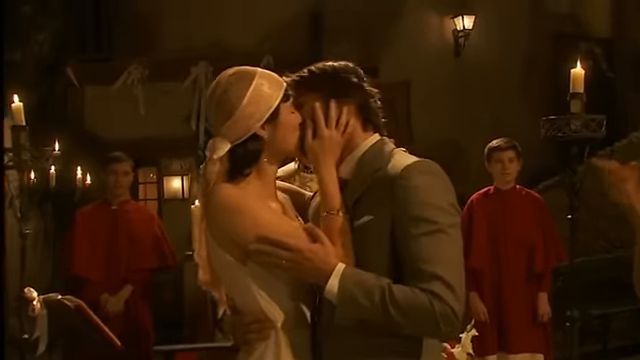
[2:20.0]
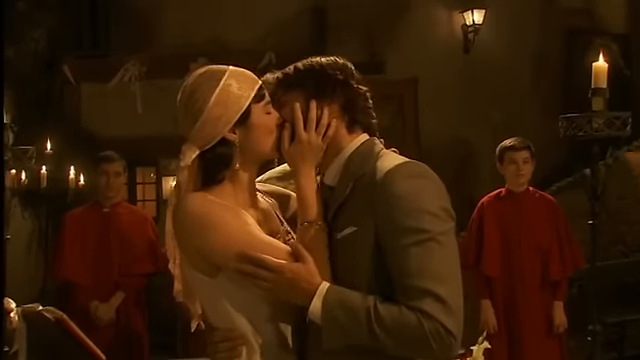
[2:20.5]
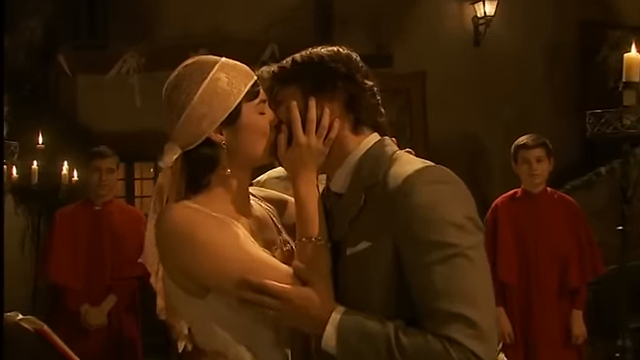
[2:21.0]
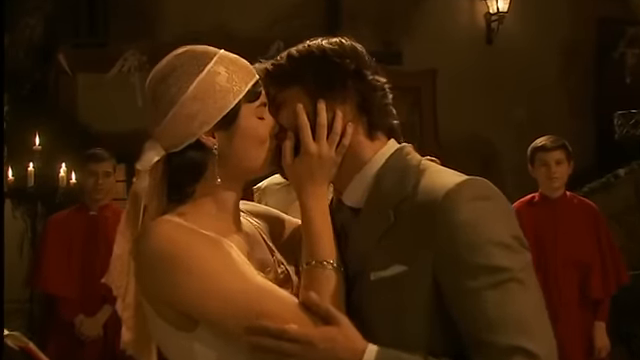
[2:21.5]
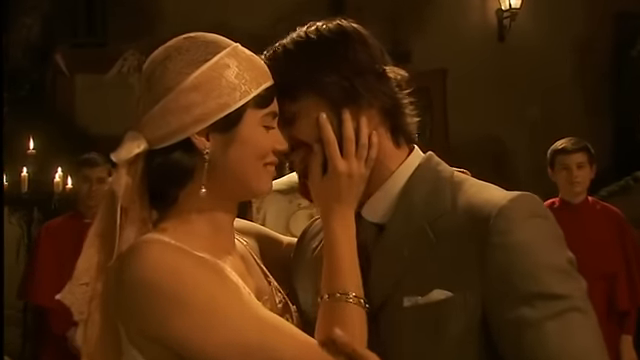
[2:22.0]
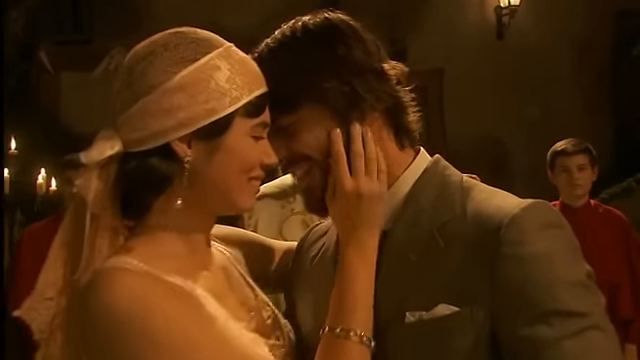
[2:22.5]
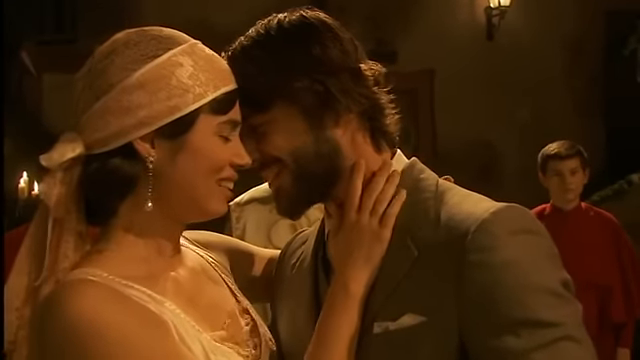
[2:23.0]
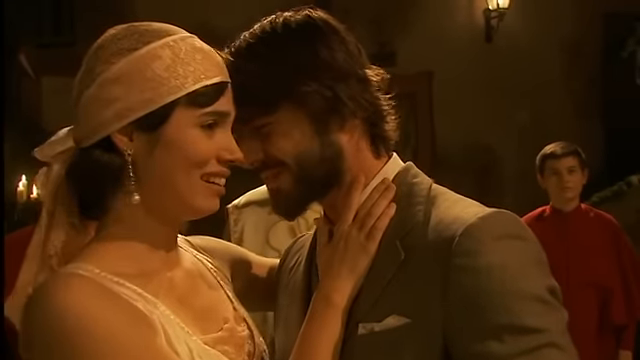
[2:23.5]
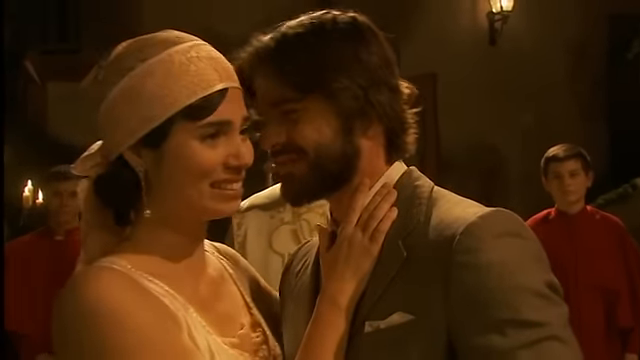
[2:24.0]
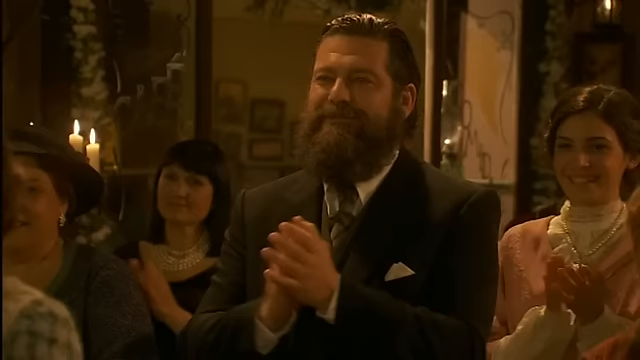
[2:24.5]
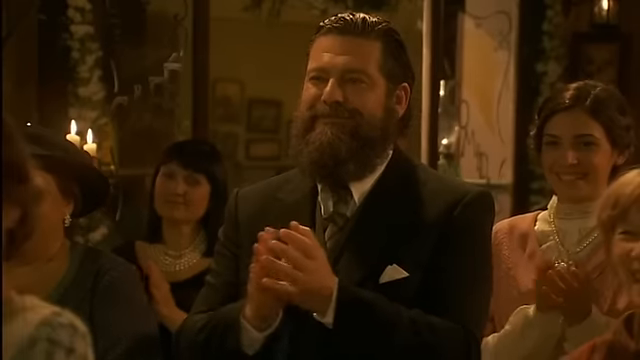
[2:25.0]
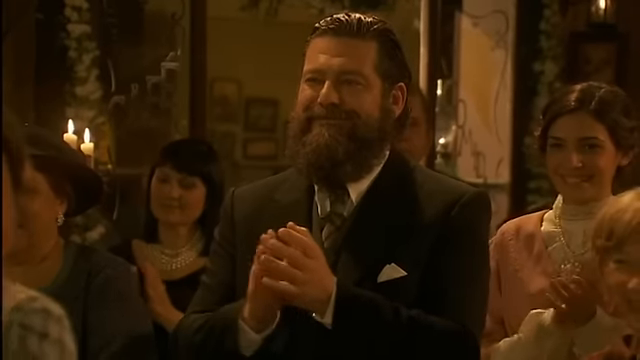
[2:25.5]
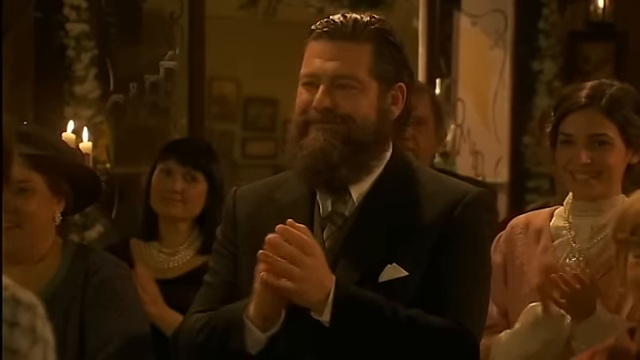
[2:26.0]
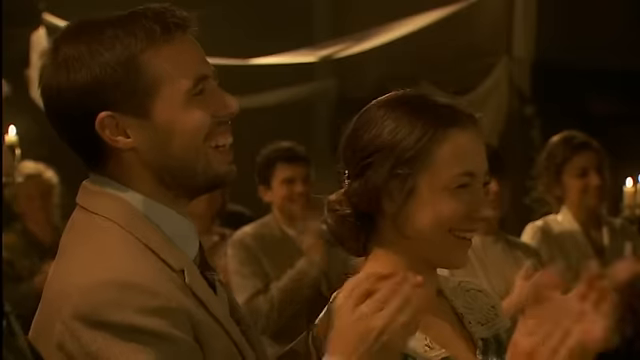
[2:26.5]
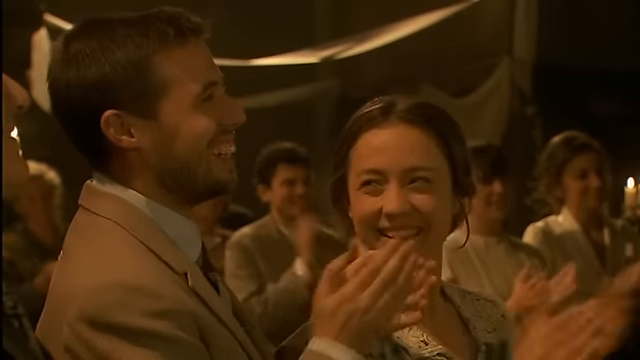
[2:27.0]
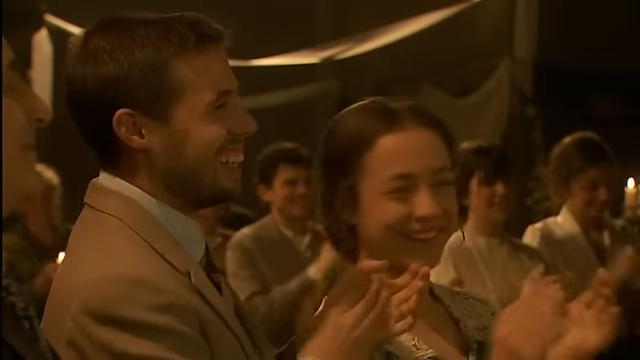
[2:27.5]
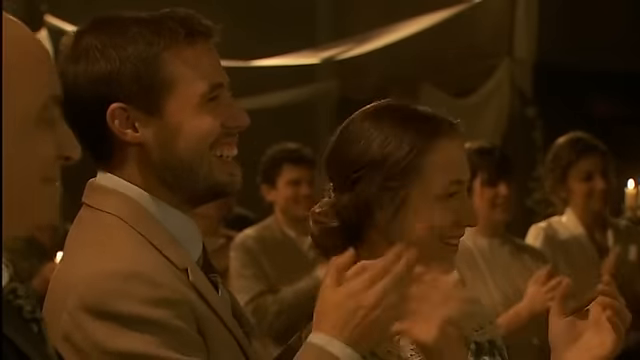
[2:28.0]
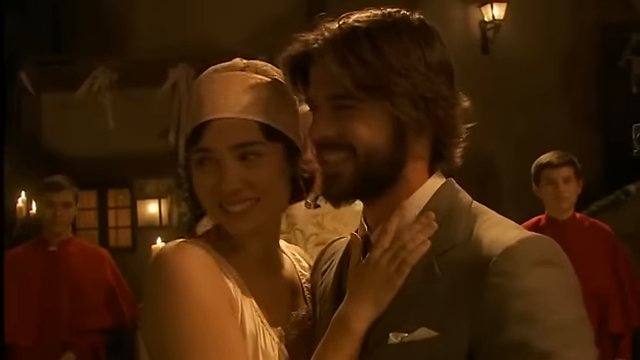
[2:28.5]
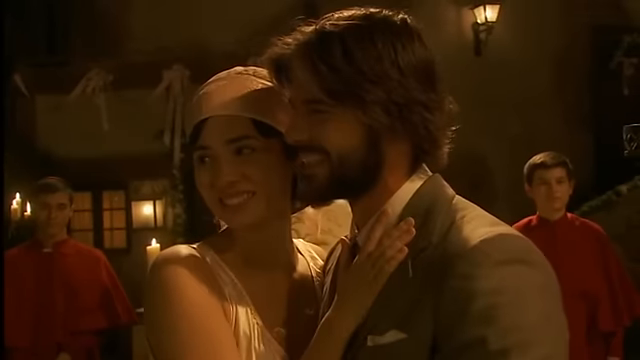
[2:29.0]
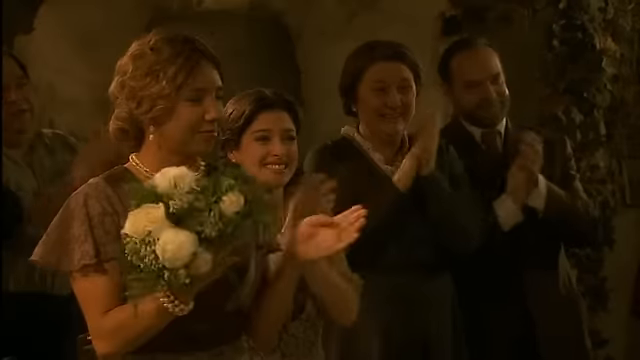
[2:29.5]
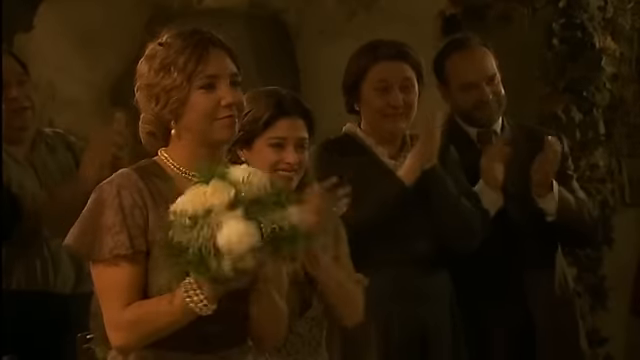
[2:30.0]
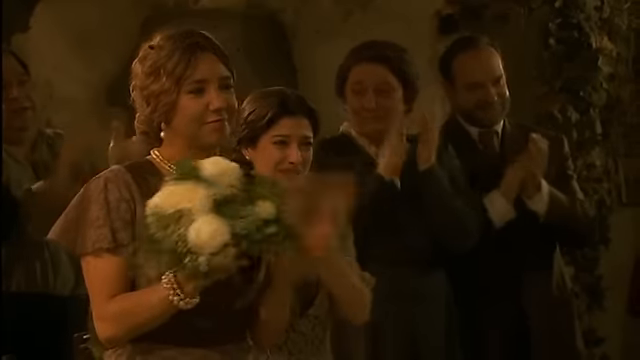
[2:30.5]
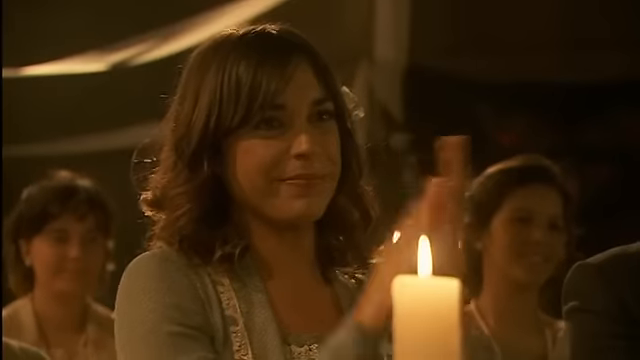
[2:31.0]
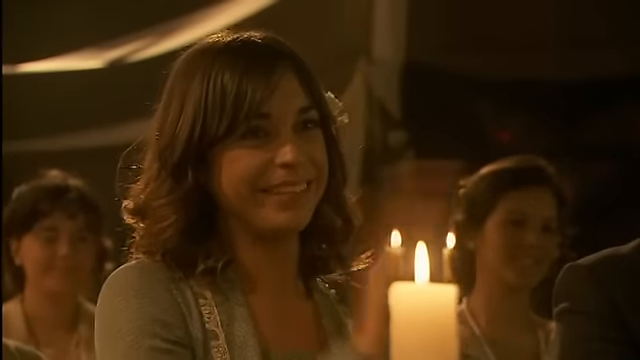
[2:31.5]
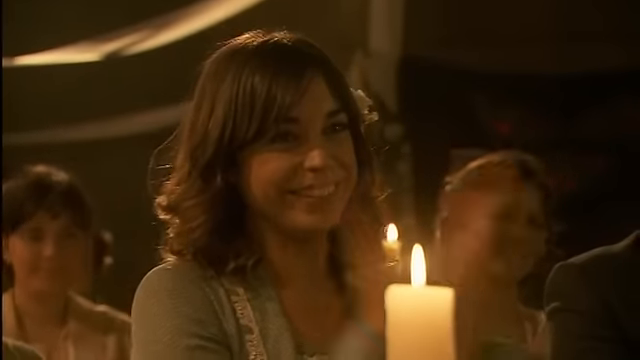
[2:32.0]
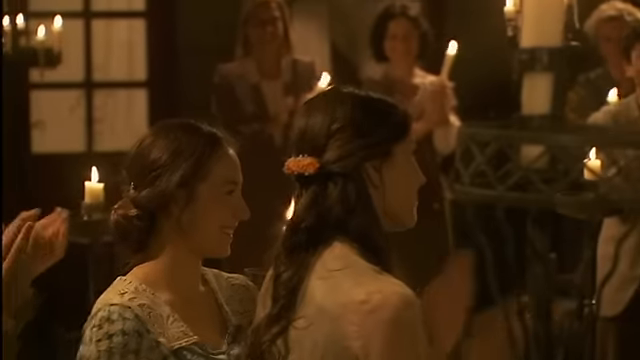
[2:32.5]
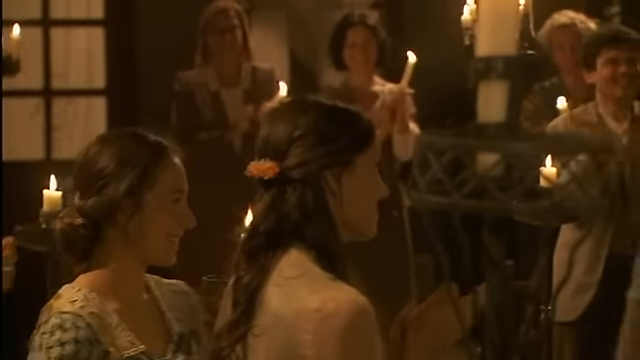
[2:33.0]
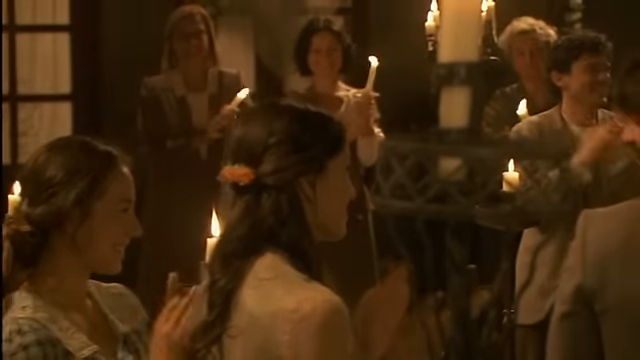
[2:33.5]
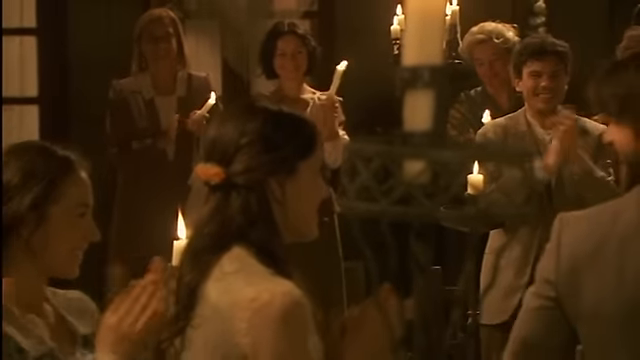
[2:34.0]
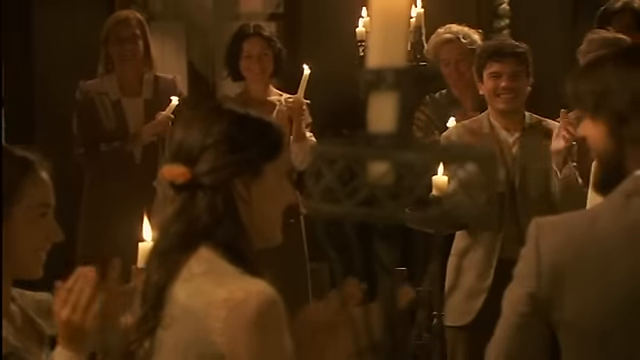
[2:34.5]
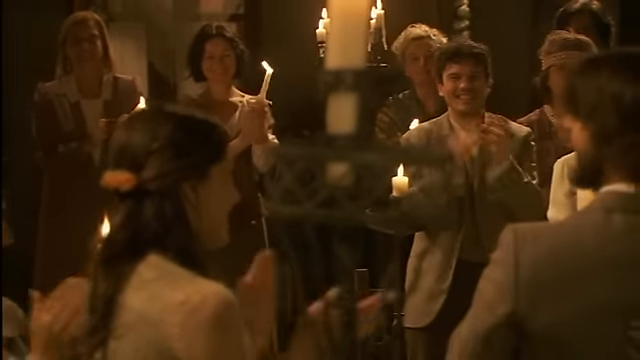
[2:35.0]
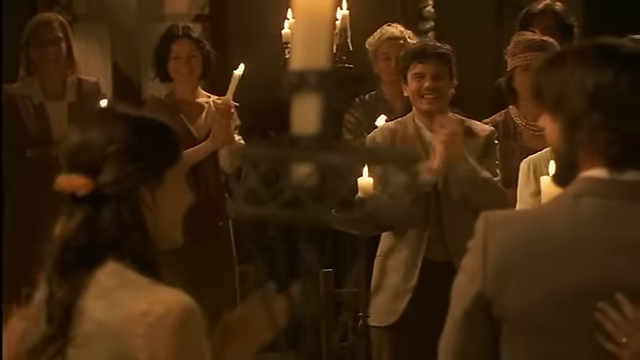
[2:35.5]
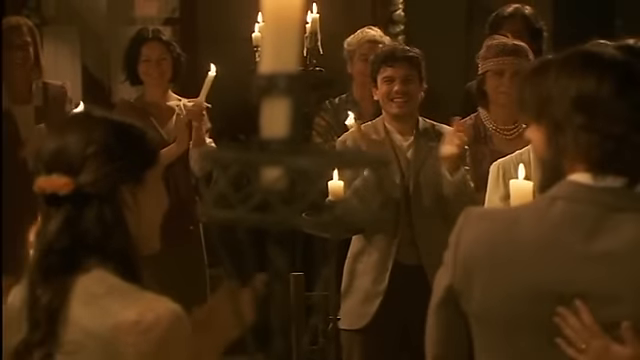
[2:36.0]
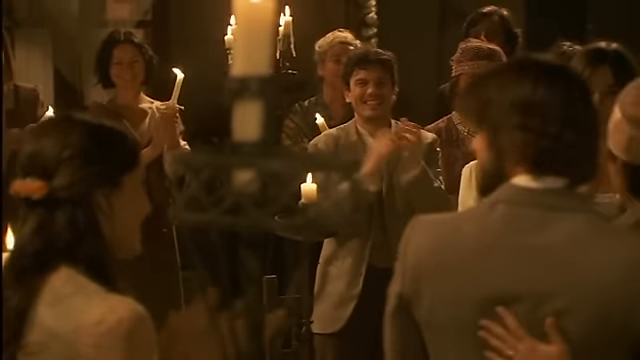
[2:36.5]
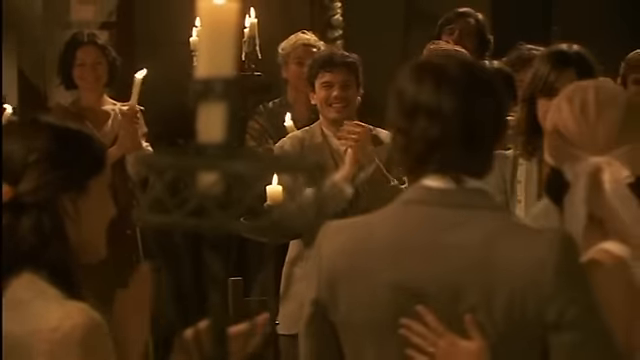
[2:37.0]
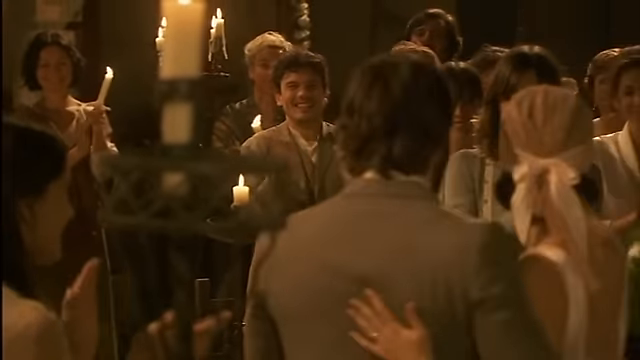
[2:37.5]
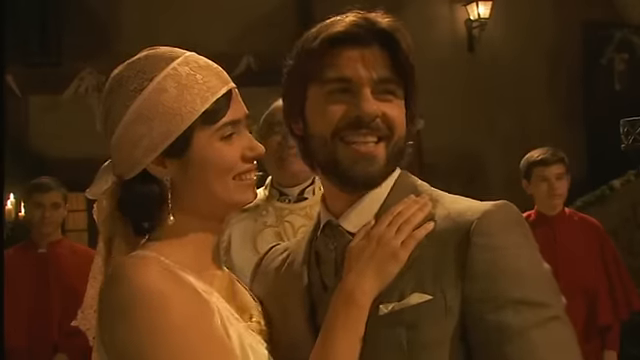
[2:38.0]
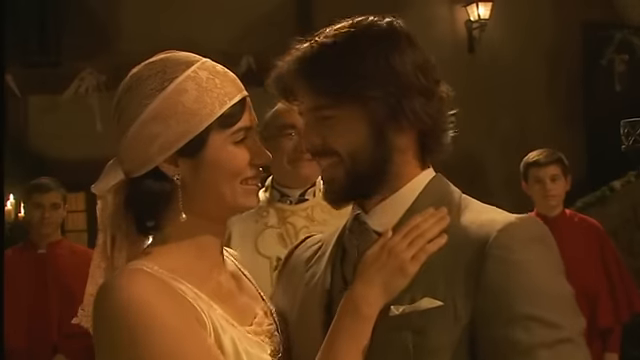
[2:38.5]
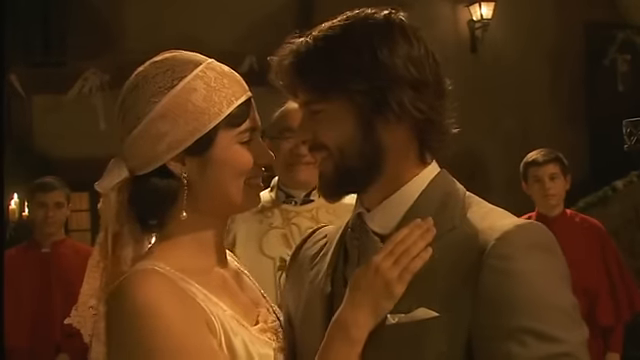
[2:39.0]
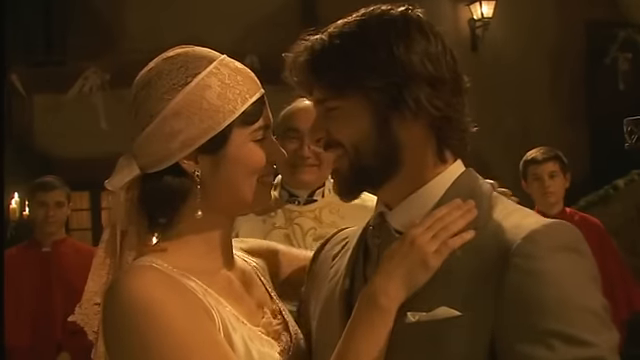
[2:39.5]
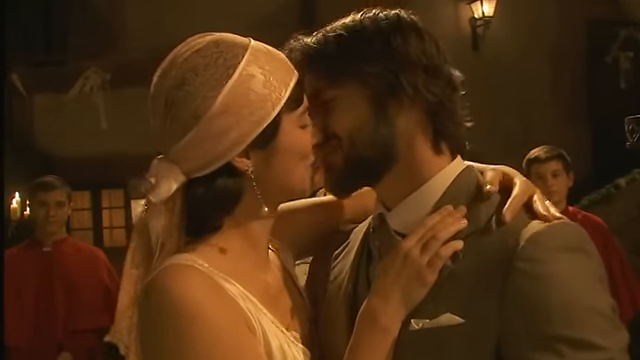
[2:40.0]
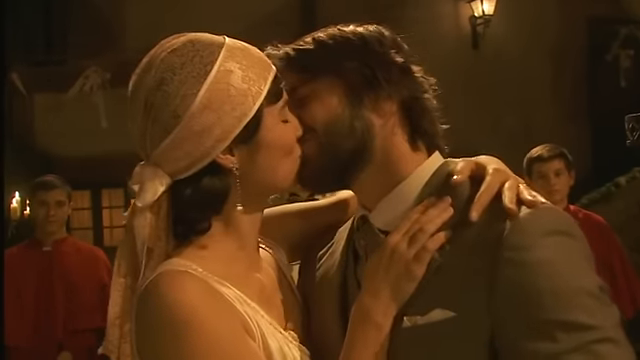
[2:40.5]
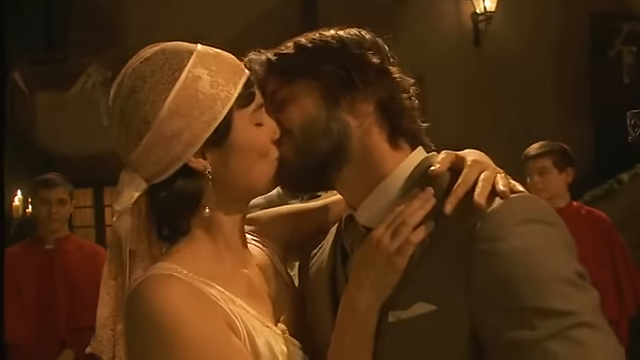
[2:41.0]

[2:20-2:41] The bride and groom are in a loving, kissing embrace; behind them seem to be older boys who work for the church, dressed in all red. The camera scans faces in the crowd, first a tall gentleman with slicked-back hair and a full beard, then the younger couple sitting toward the back, clapping their hands and smiling, then the couple as they look around the room lovingly. The lady with the drop pearl earrings and pearl necklace sits next to the lady with the baby stroller, and they hold a bouquet while everybody claps and cheers. A close-up shows the lady with the short brown bob and the white flower in her hair, also clapping and laughing. Lit candles are all around the church hall, and people even seem to be holding them as they clap and cheer for the couple. The shot ends with the two looking at each other lovingly as the priest smiles gleefully behind them, seeming to approve.